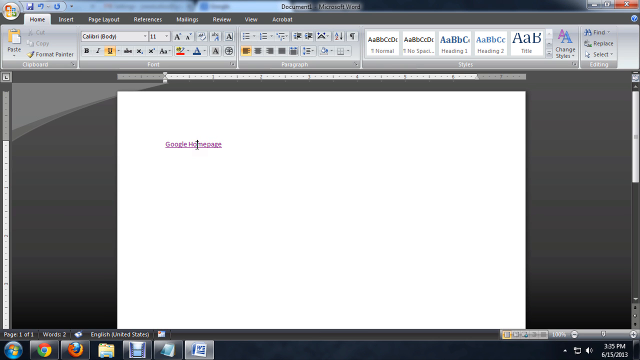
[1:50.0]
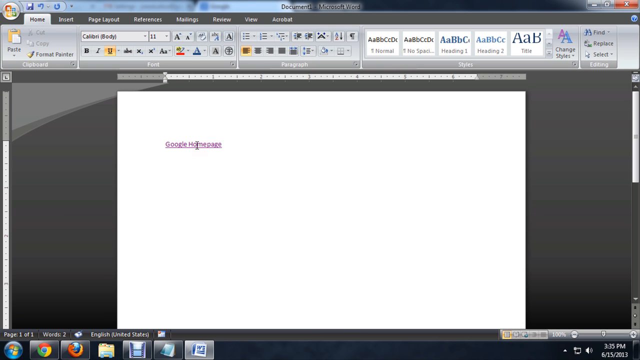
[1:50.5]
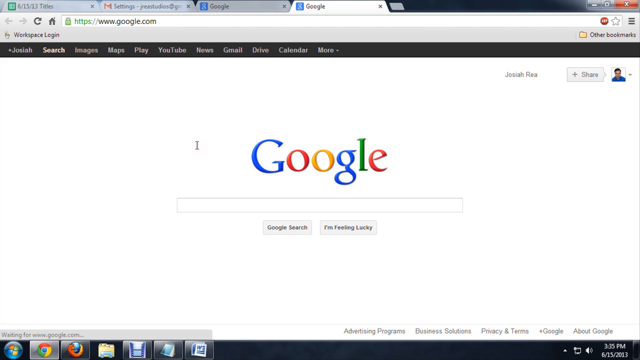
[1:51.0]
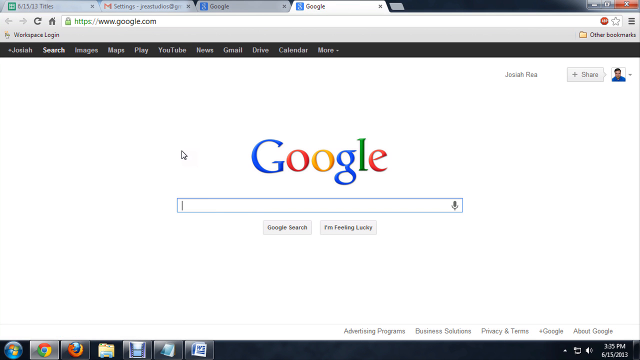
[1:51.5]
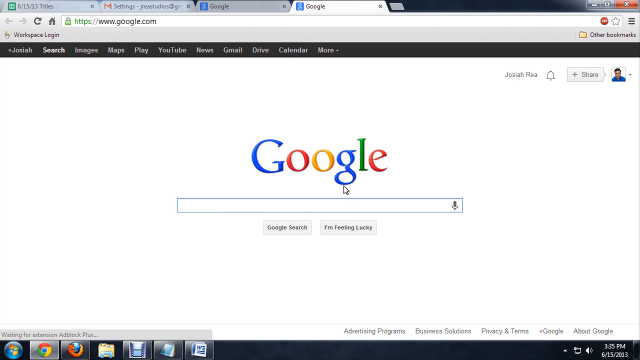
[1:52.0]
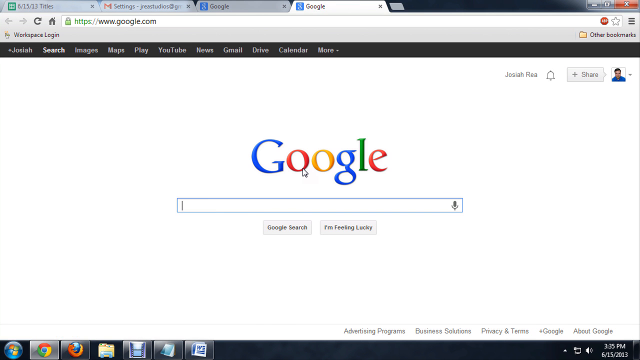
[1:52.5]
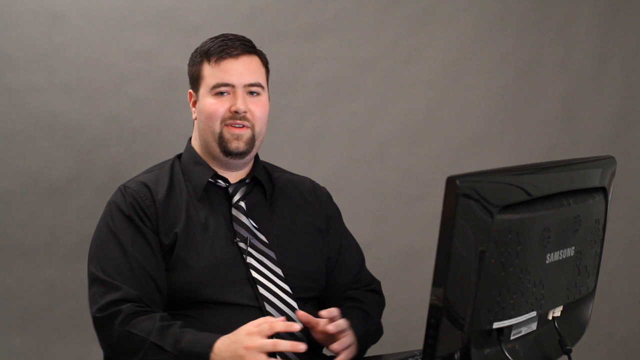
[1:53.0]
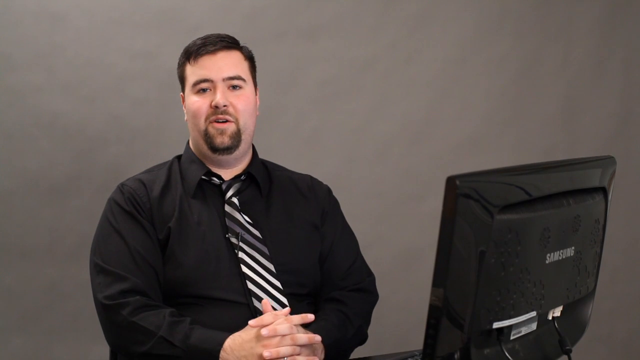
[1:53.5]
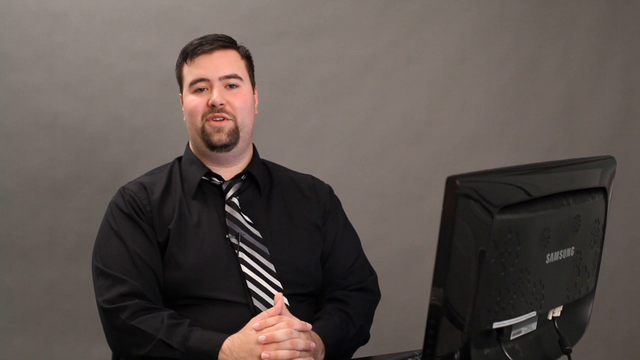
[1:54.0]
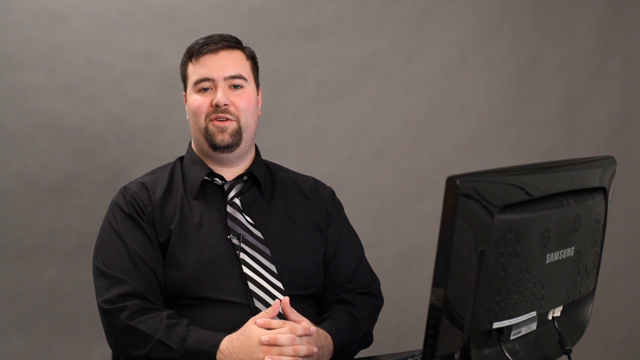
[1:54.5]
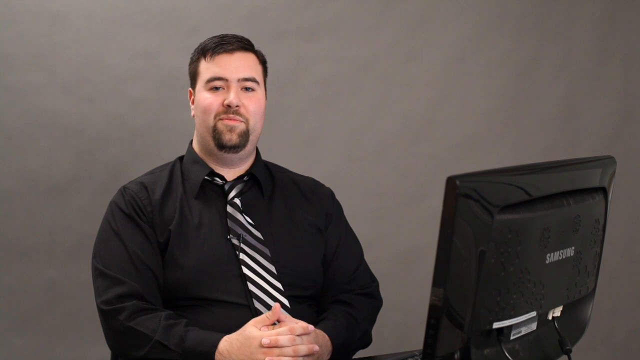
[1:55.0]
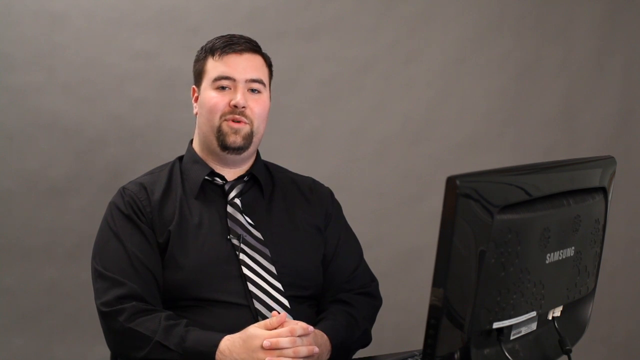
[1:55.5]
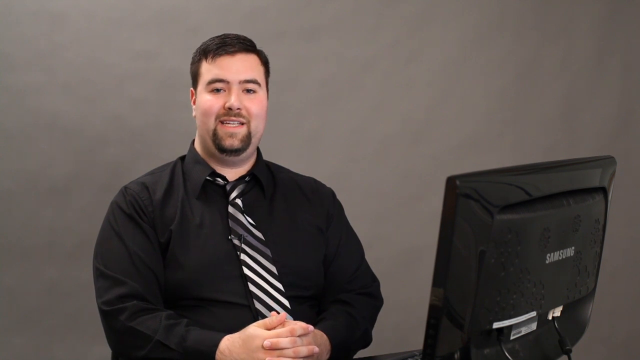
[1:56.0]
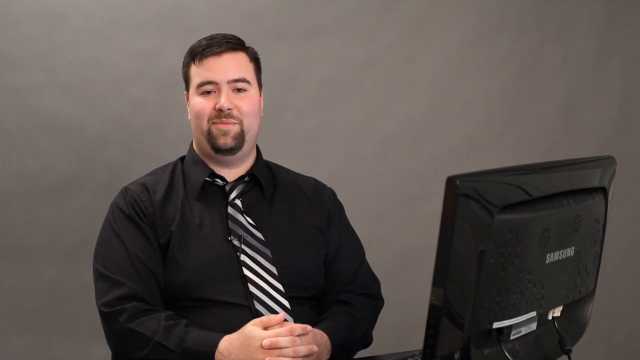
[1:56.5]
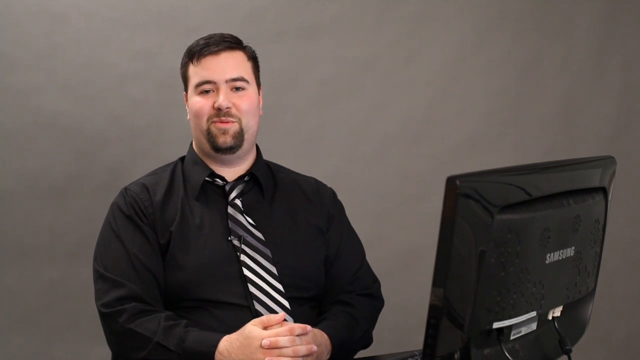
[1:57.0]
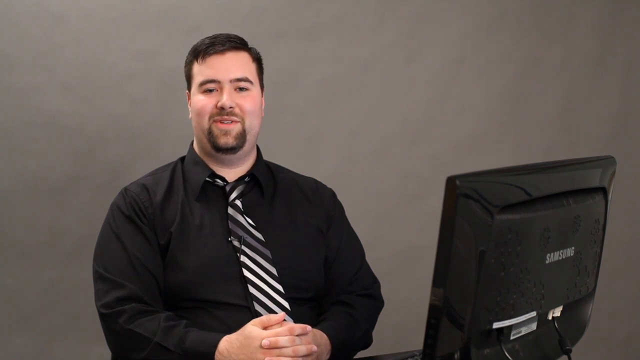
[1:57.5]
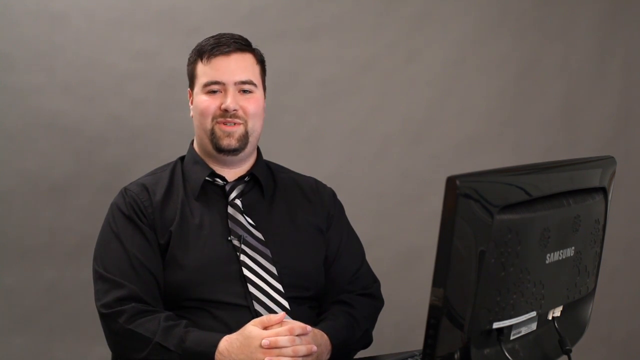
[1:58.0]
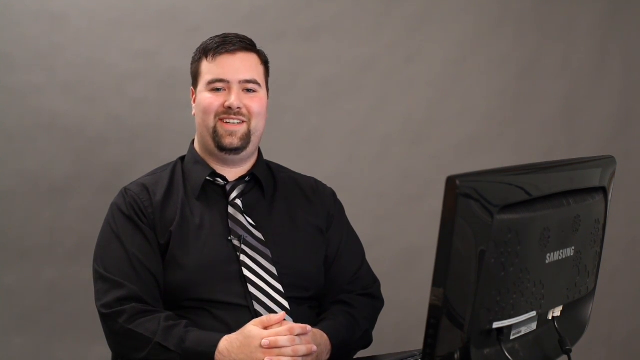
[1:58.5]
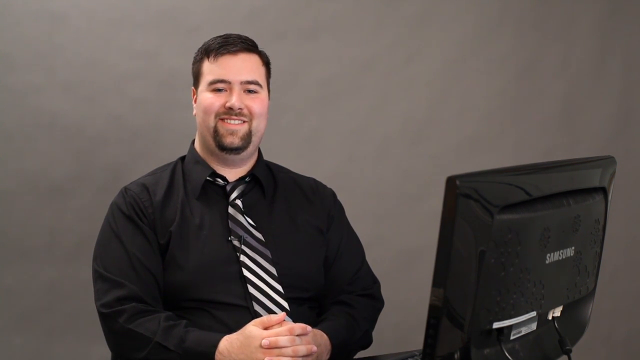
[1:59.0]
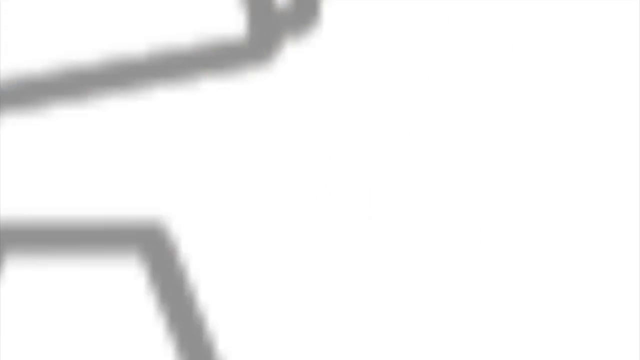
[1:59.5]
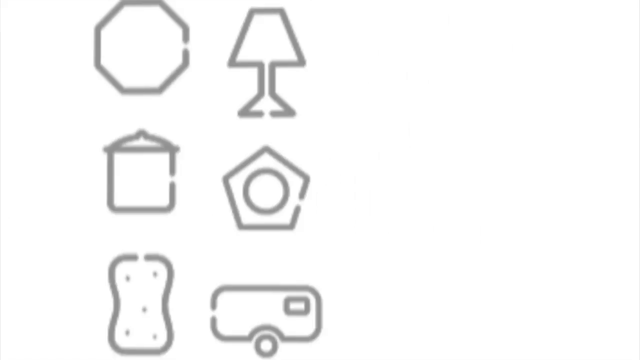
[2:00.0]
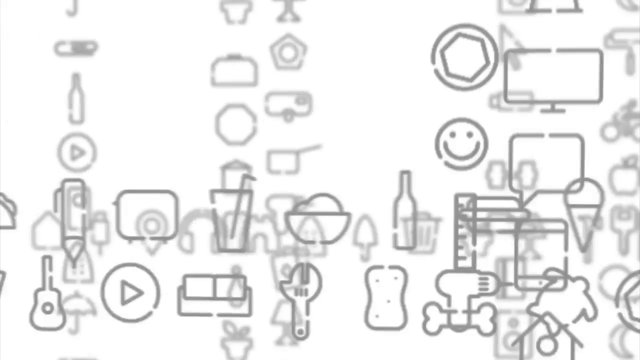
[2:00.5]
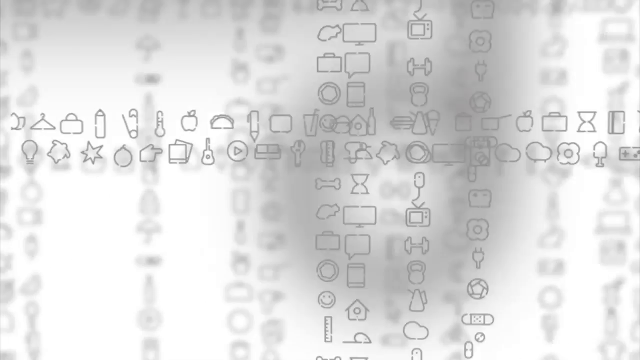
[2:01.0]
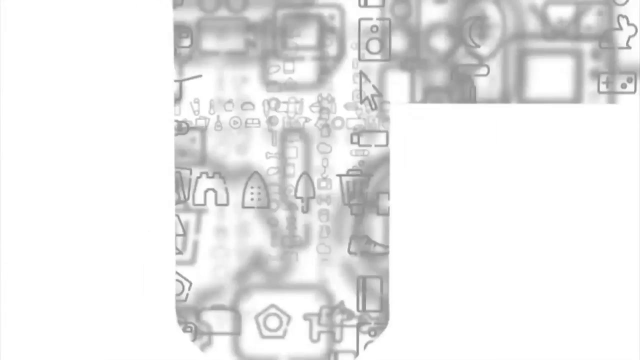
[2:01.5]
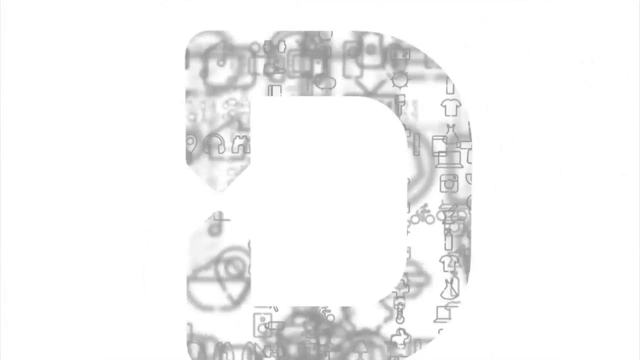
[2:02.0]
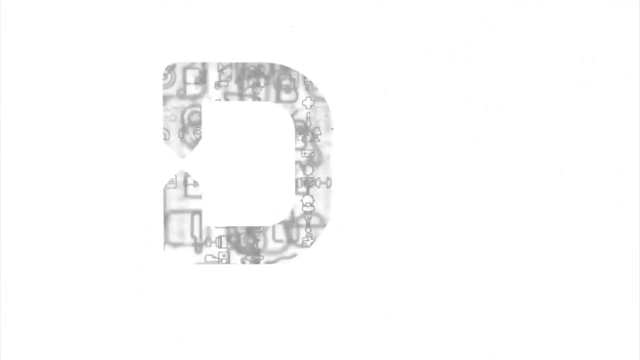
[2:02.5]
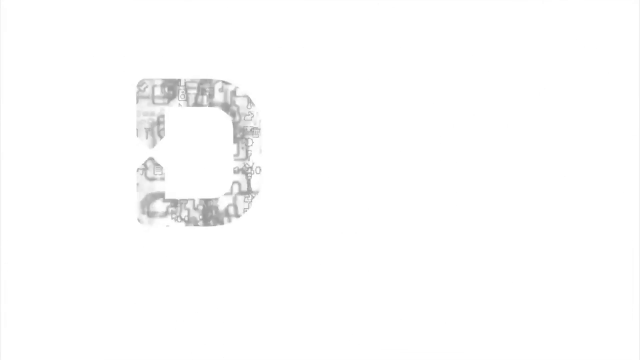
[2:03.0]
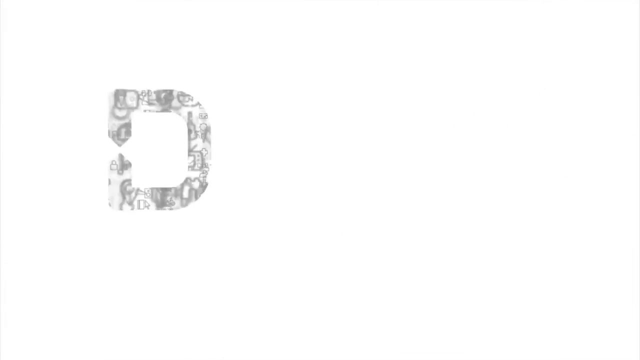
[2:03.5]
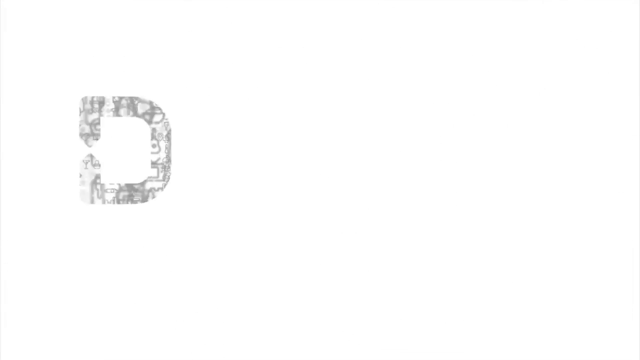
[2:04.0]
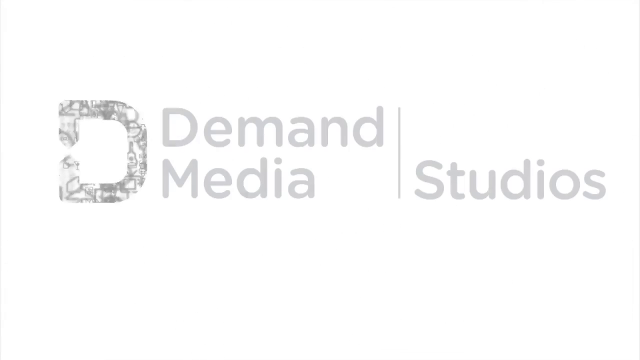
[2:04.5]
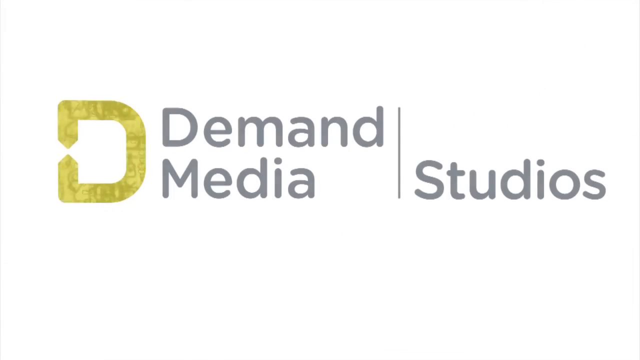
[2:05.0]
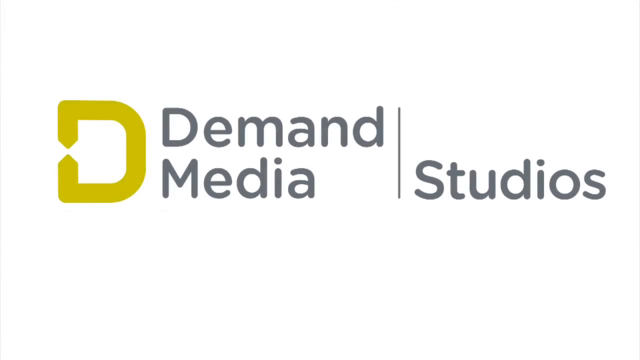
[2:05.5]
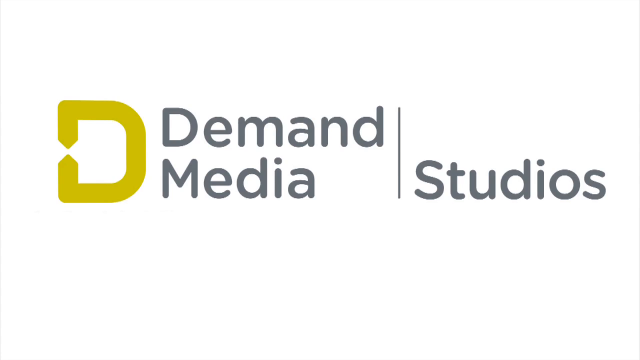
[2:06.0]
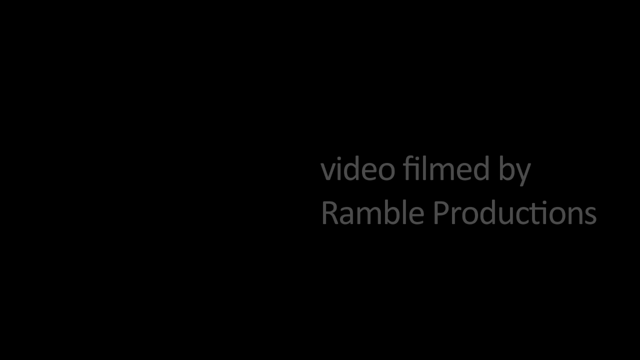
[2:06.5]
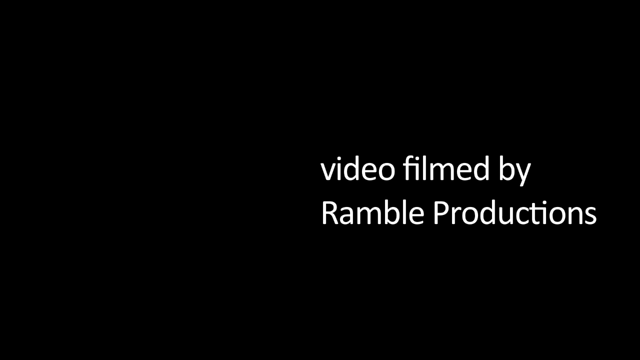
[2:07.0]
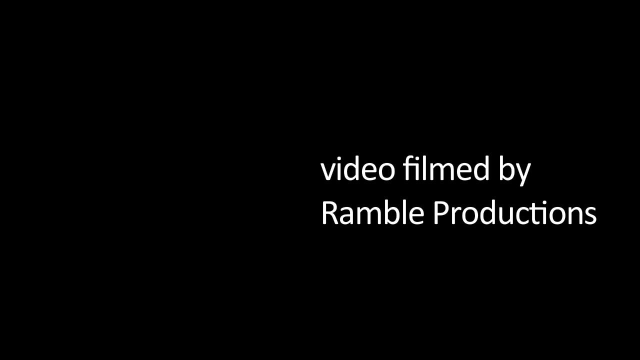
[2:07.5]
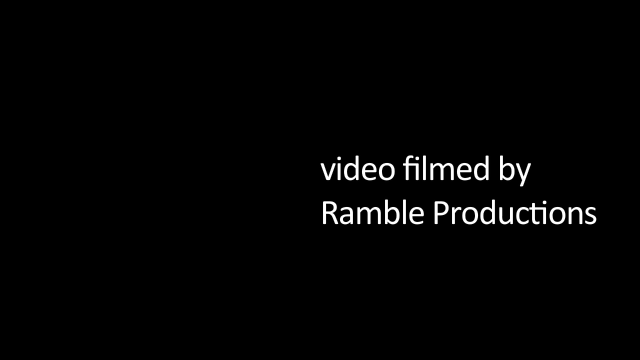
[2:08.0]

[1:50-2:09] He clicks the hyperlink in the Word document, and it opens a Google homepage in the Google application on his computer. The video then cuts to him speaking toward the camera with a happy expression; his hands do not move. The shot cuts out and the video slowly fades to a white background with various symbols, such as an ice cream, an apple, a pot and other items, floating around before forming the letter D in a logo. The words "Demand Media Studios" pop up, showing the full logo, in which the left side of the D is not fully connected. After the black and white symbols go away, the D turns yellow, with the other words of the logo in medium gray. The screen then turns black and the words "Video filmed by Rambo Productions" appear.